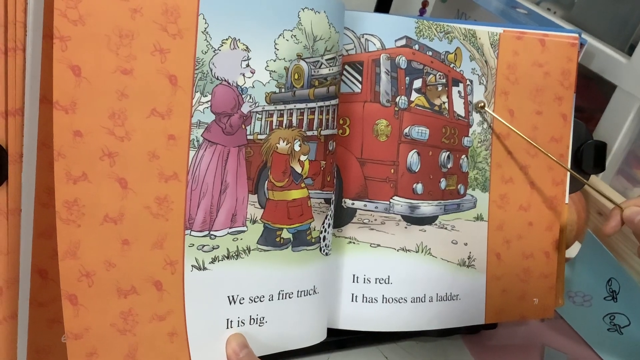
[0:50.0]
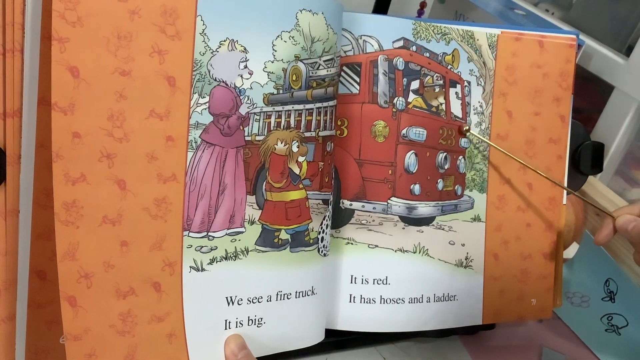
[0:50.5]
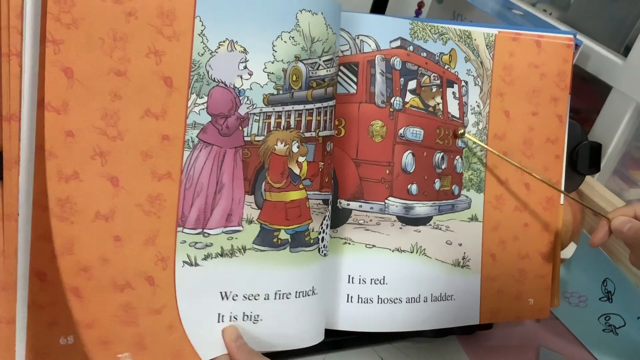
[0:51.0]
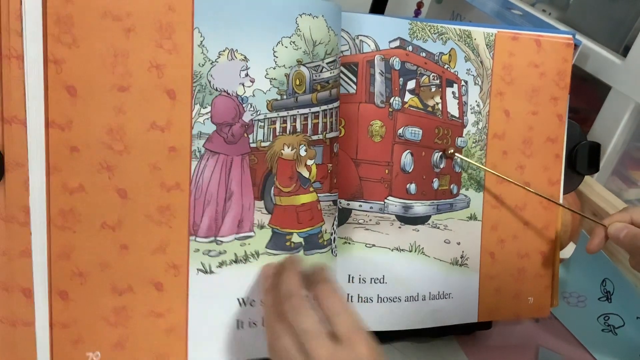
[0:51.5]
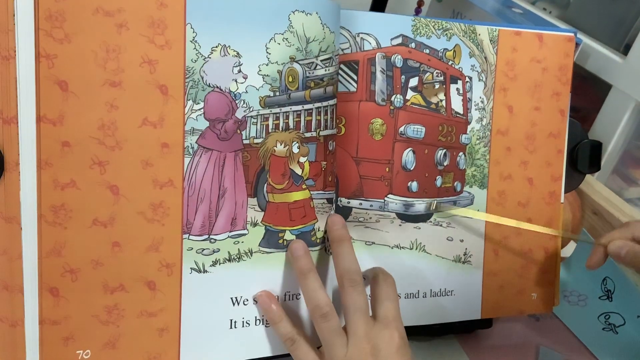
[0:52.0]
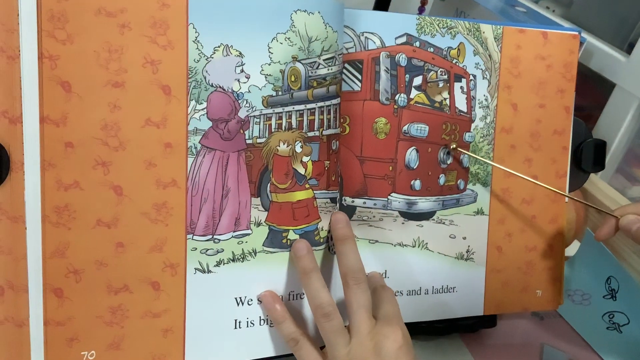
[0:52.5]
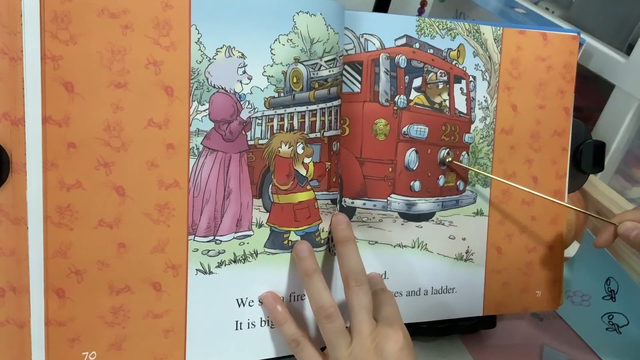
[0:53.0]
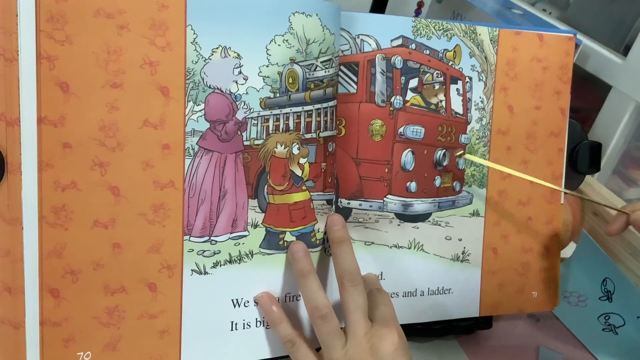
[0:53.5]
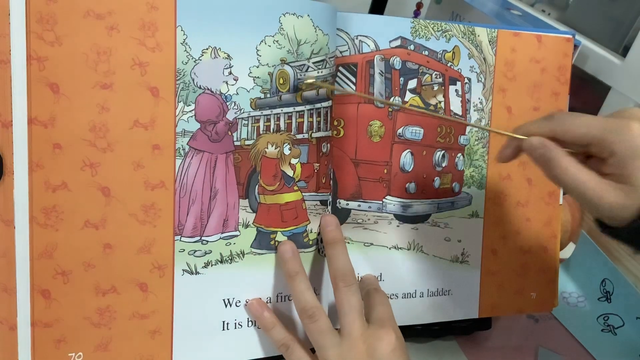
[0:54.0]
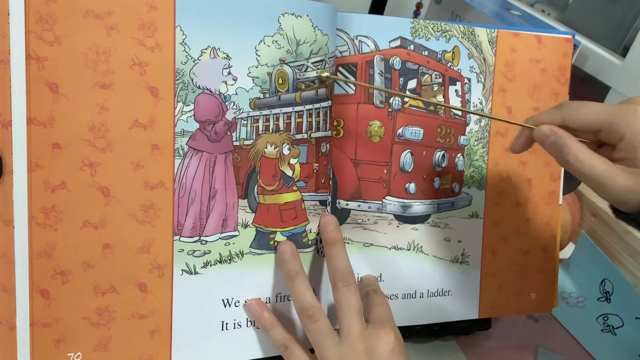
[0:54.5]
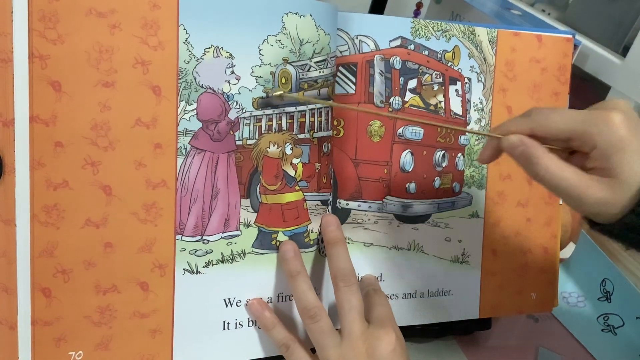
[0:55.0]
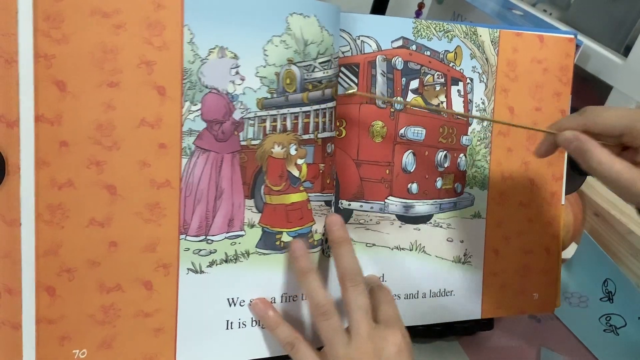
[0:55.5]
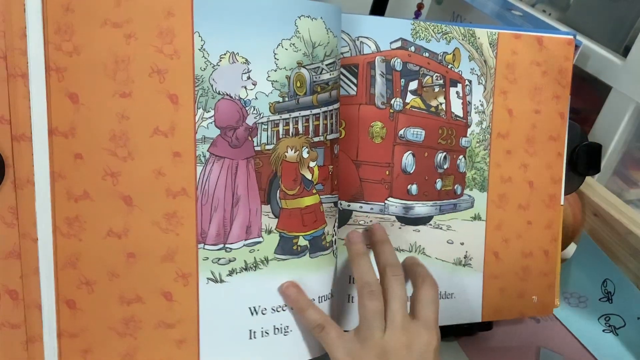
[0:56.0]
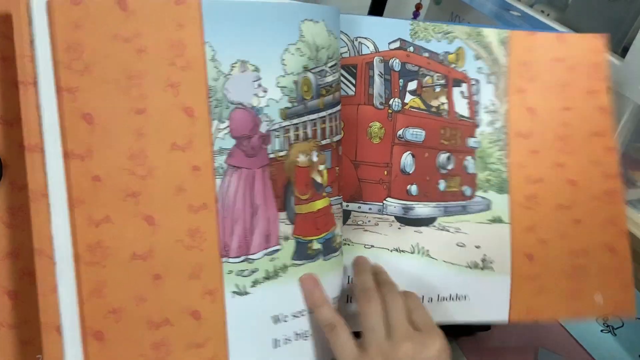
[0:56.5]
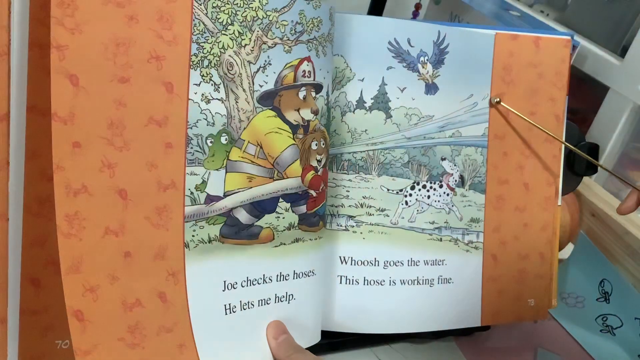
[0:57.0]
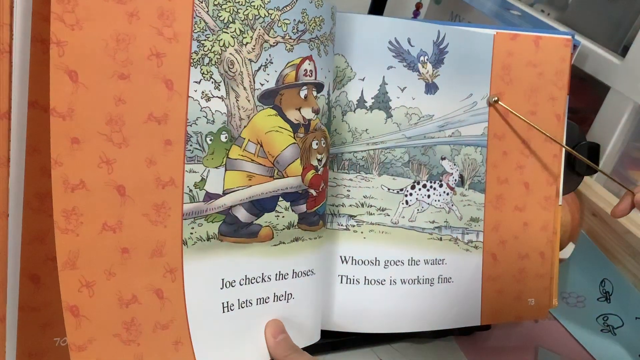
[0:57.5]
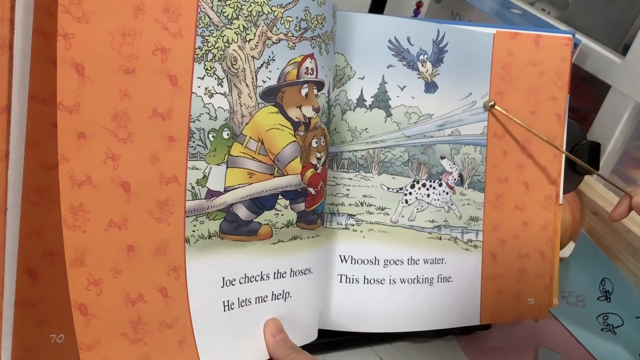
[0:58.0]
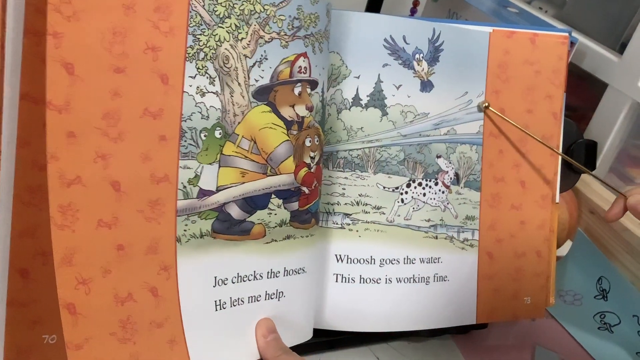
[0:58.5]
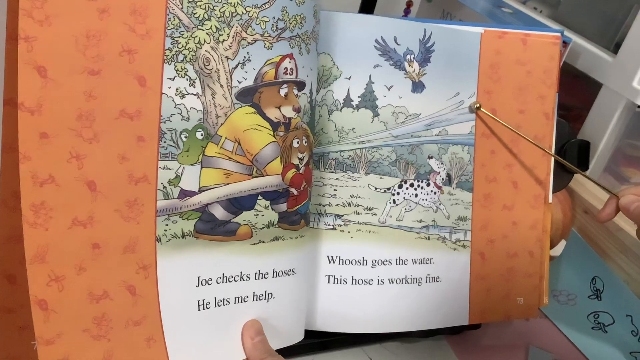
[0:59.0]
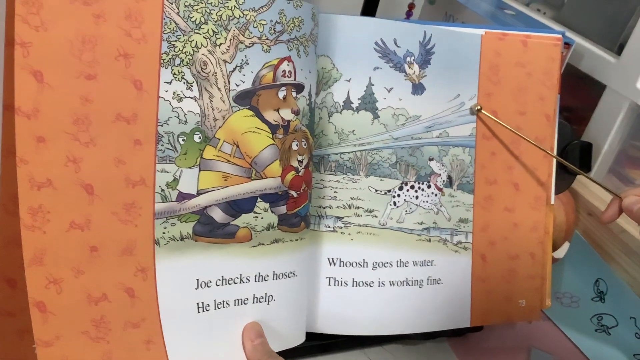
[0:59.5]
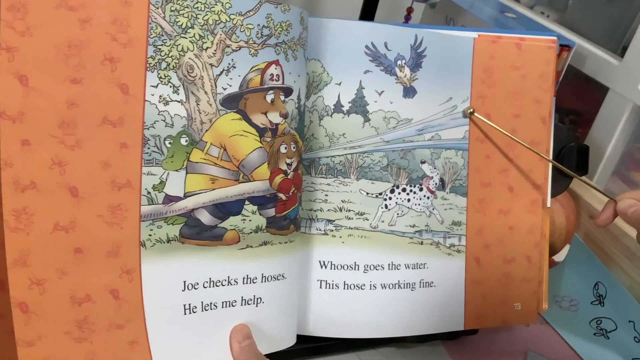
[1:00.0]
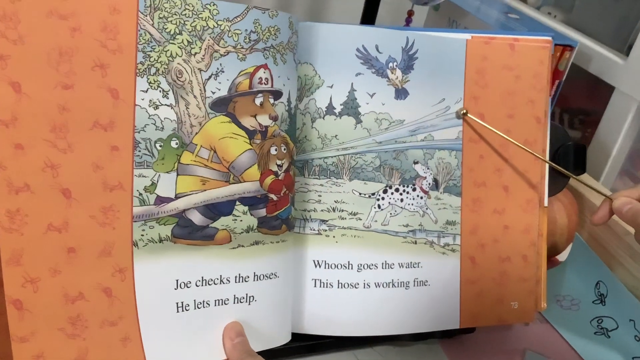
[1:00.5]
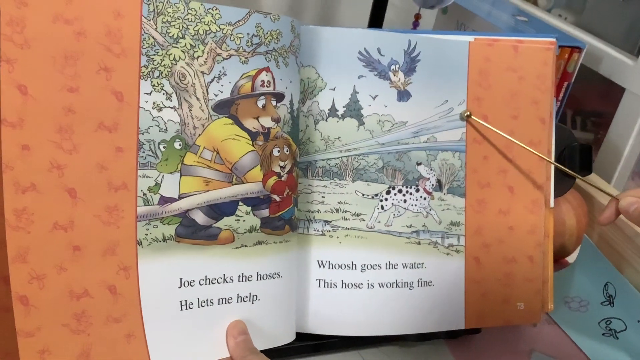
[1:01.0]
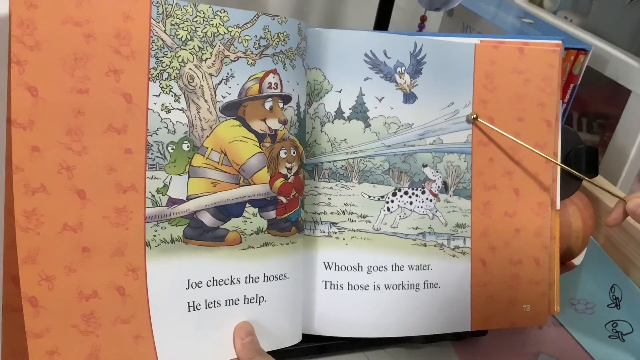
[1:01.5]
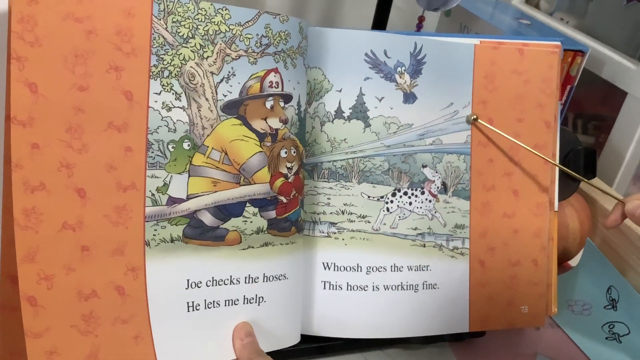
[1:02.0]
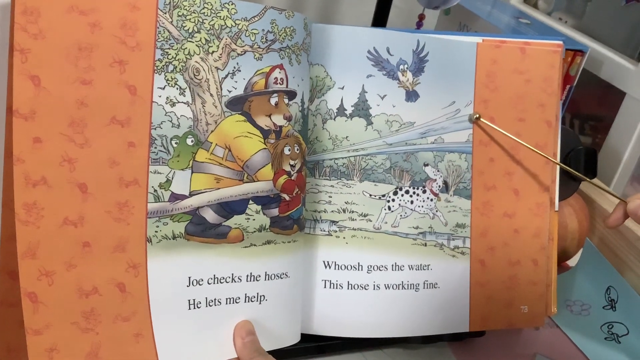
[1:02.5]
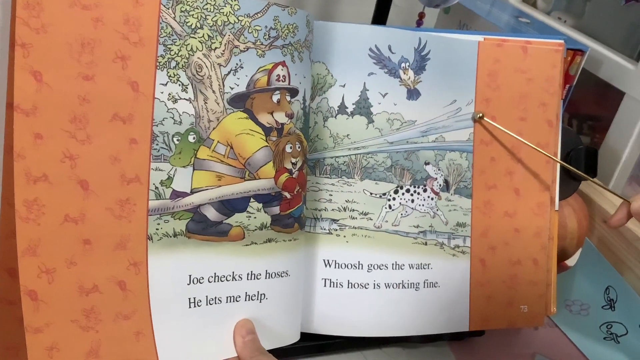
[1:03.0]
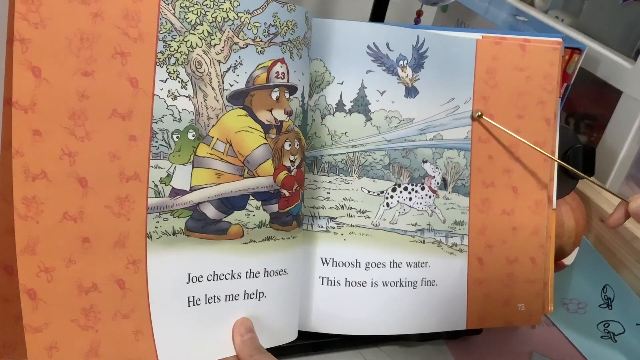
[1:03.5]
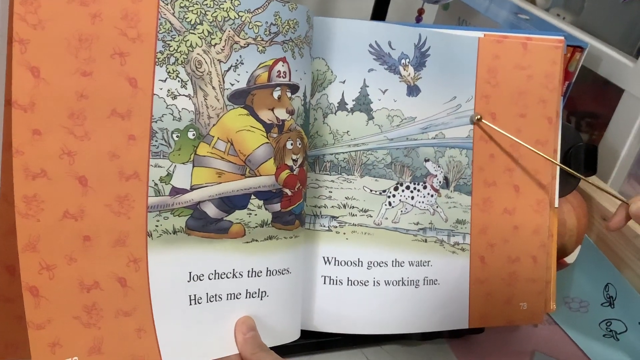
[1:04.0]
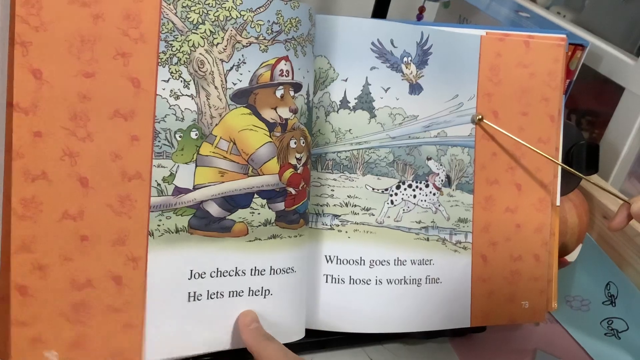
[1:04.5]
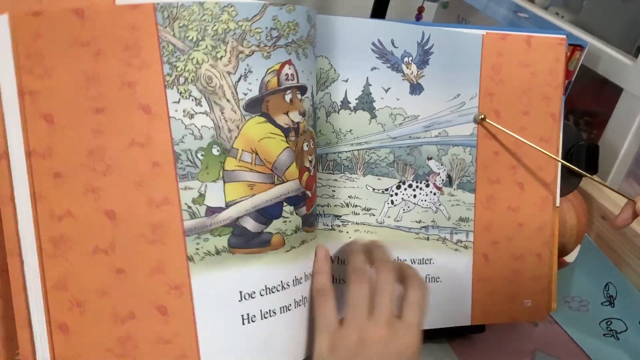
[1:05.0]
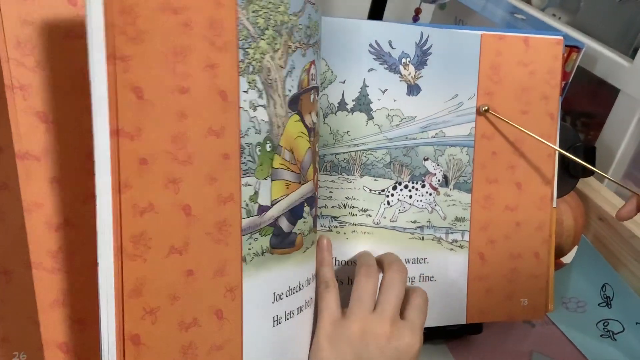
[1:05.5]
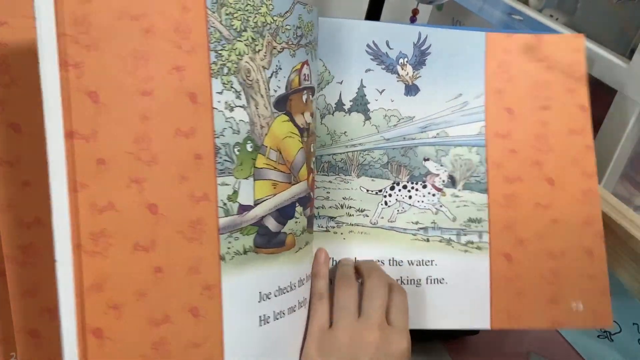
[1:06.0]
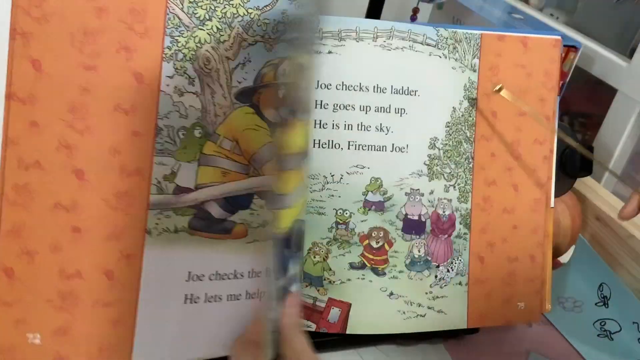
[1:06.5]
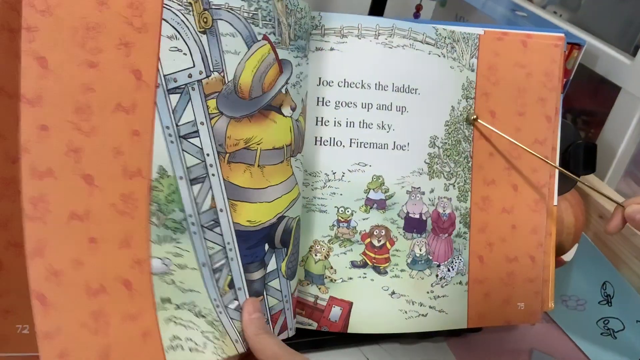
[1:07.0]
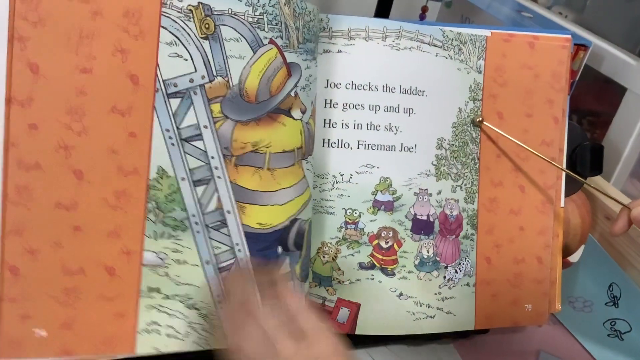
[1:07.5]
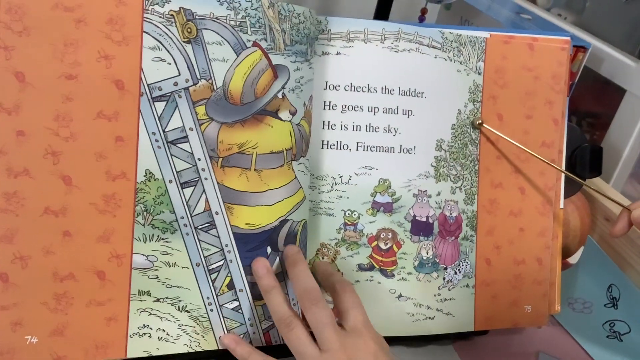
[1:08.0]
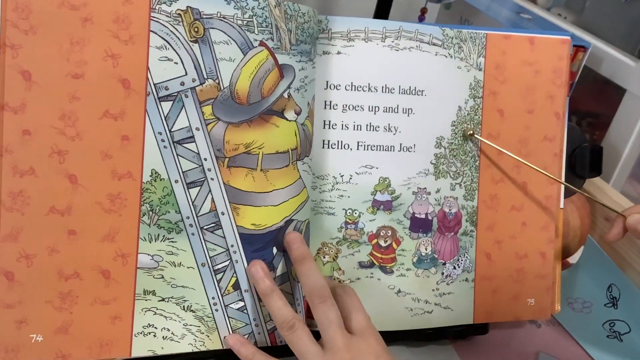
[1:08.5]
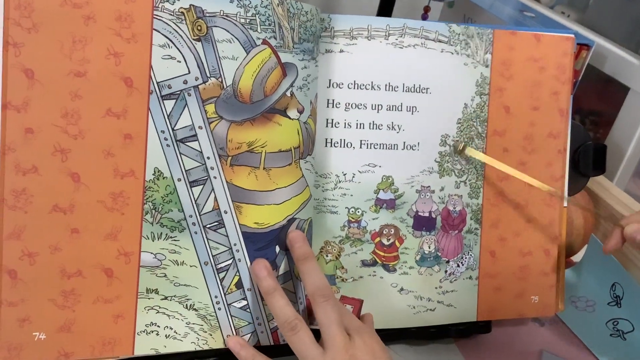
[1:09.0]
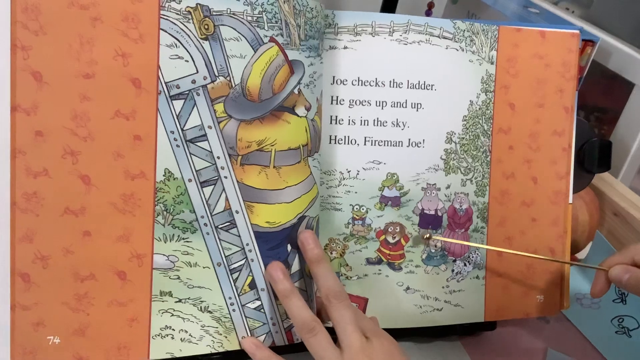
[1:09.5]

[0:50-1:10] On this page the cat teacher is with the dog boy and the bear fireman, who is again sat in the red fire truck. Text on the screen says, "we see a fire truck. It is big, it is red, it has hoses and a ladder." The dog boy and the cat teacher are watching the bear drive the fire engine. The setting is outside, with green trees around them; there are three of them. The page then changes to another scene with three people, the bear fireman and the dog child, plus a bird flying in the sky and a Dalmatian dog. The fireman is spraying the fire hose and the bird is startled. The text says, "Joe checks the hoses. He lets me help. Woosh goes the water. This hose is working fine." An alligator boy is also stood behind them.